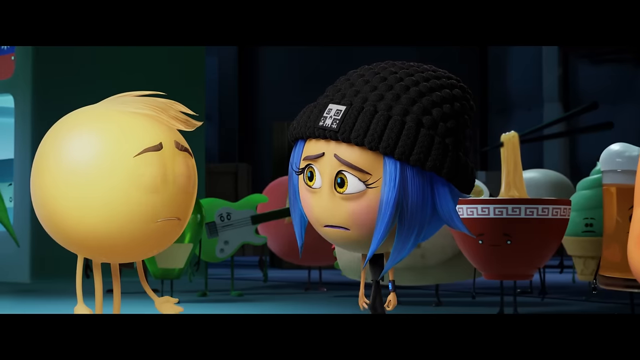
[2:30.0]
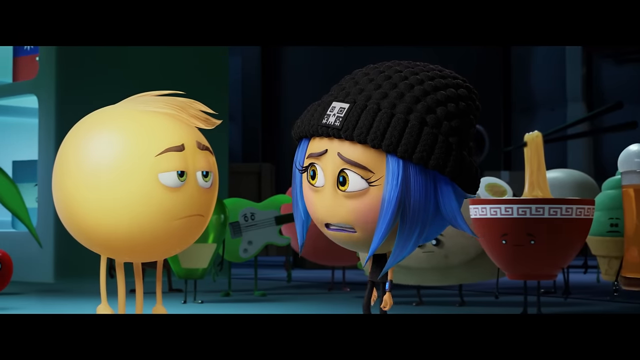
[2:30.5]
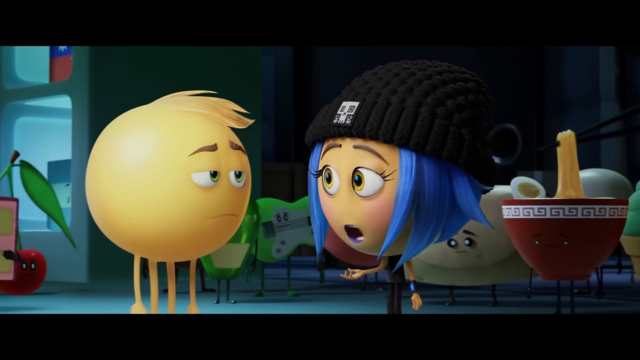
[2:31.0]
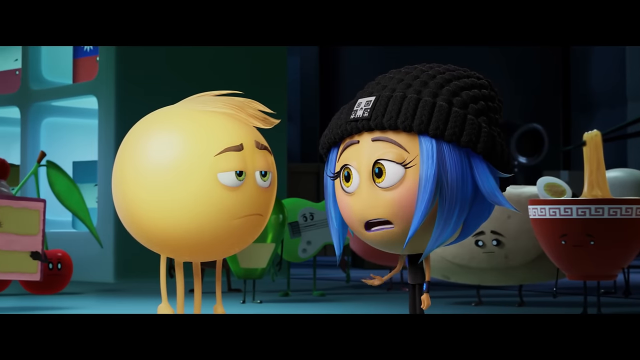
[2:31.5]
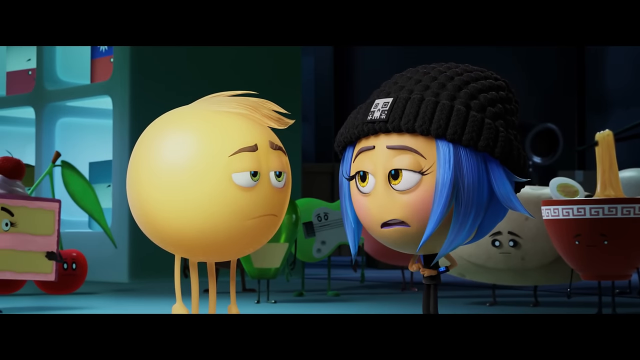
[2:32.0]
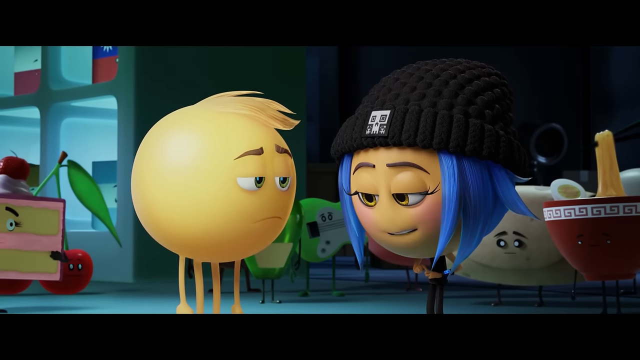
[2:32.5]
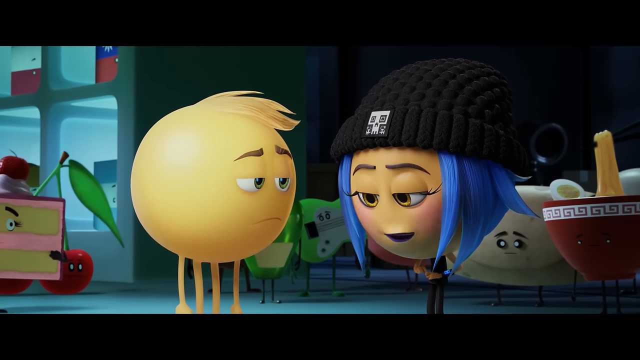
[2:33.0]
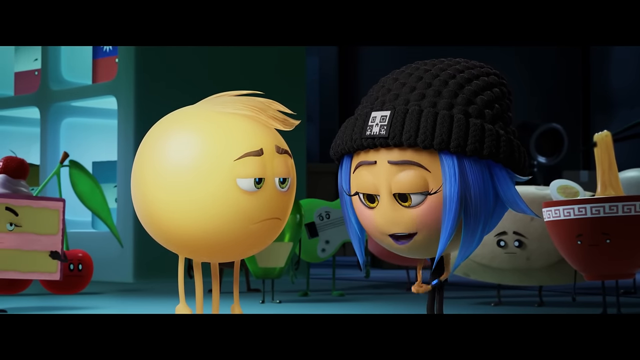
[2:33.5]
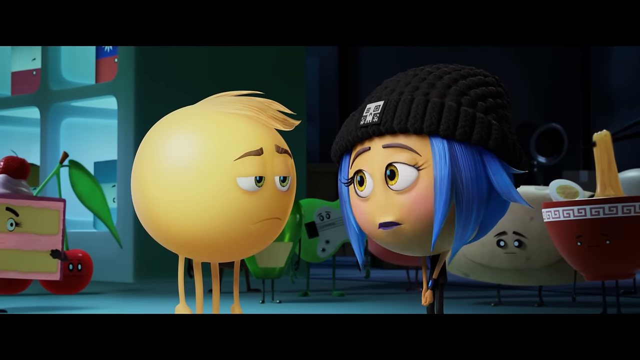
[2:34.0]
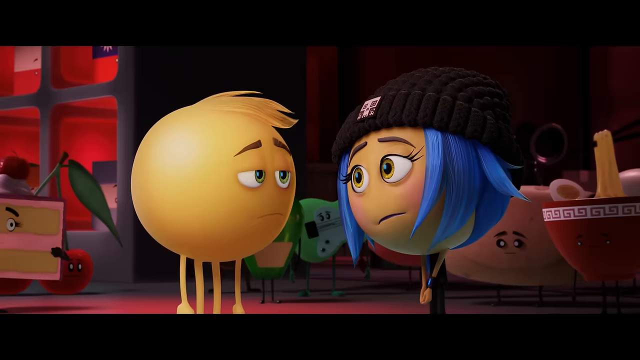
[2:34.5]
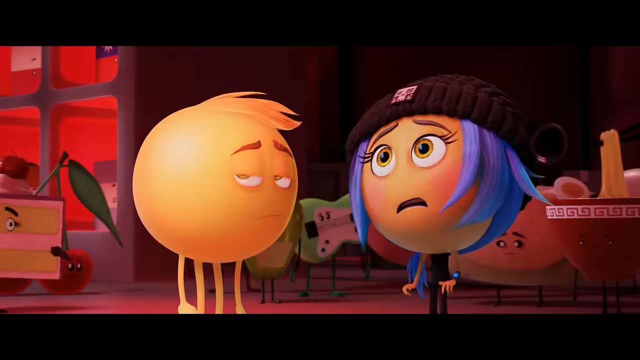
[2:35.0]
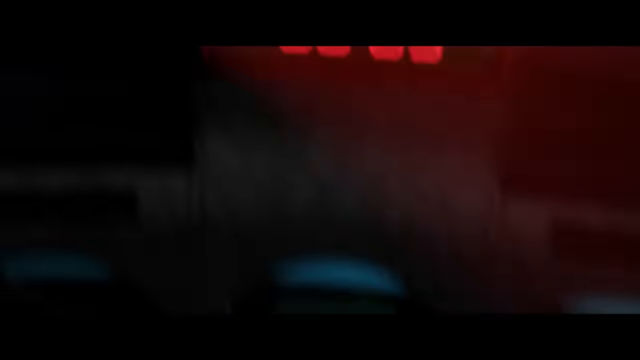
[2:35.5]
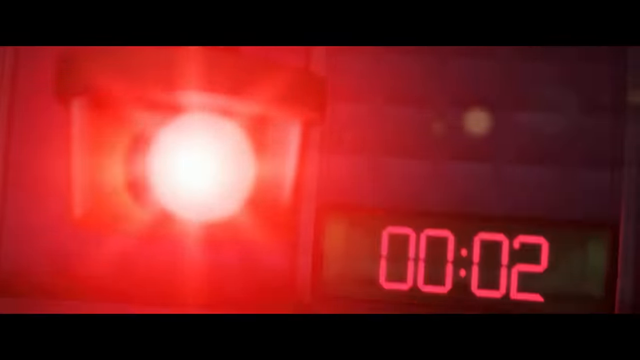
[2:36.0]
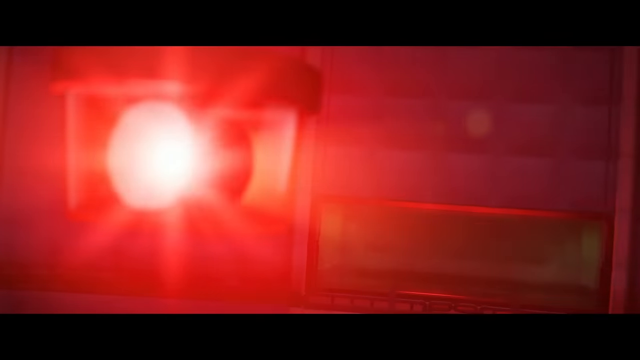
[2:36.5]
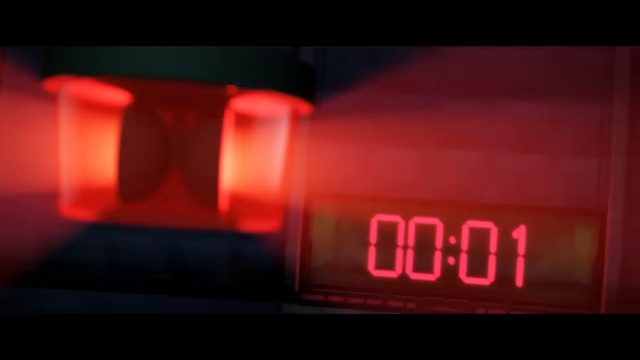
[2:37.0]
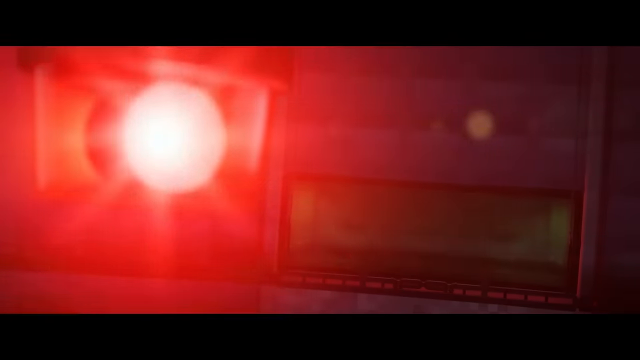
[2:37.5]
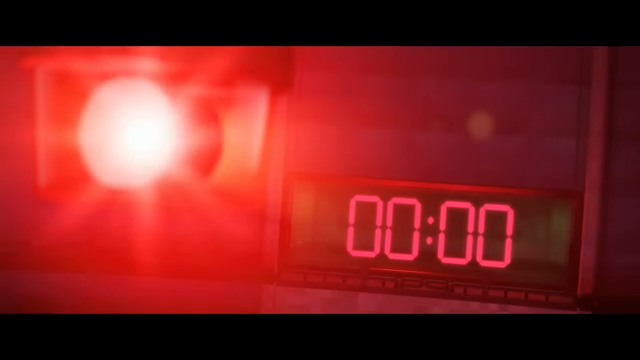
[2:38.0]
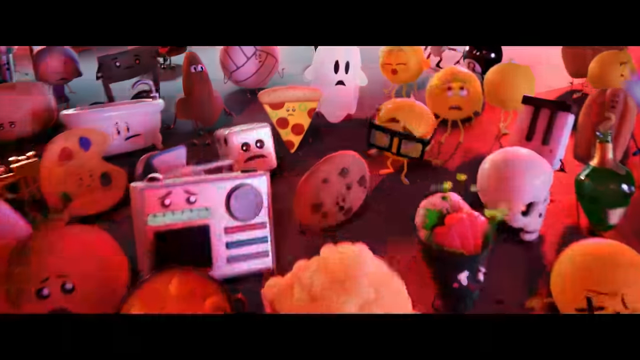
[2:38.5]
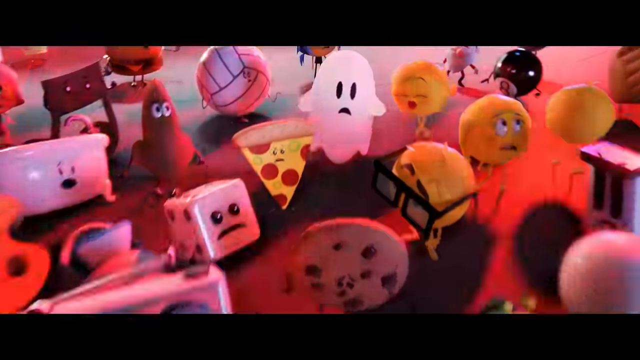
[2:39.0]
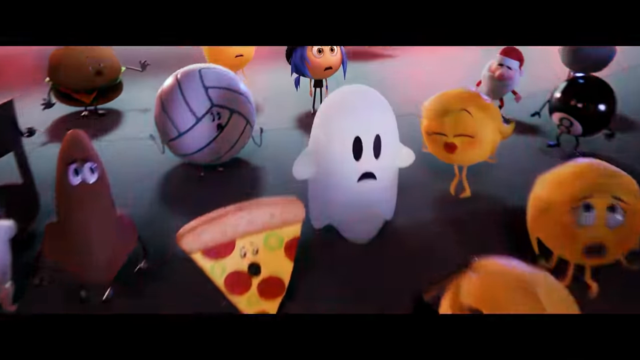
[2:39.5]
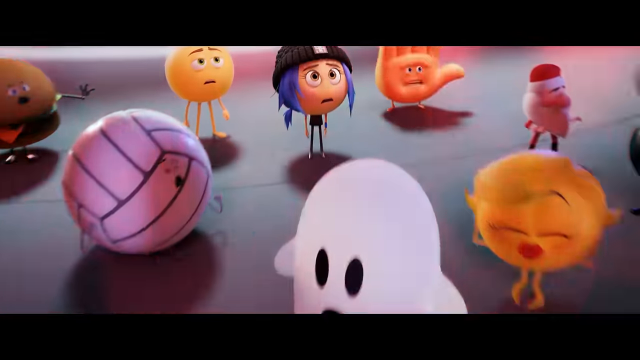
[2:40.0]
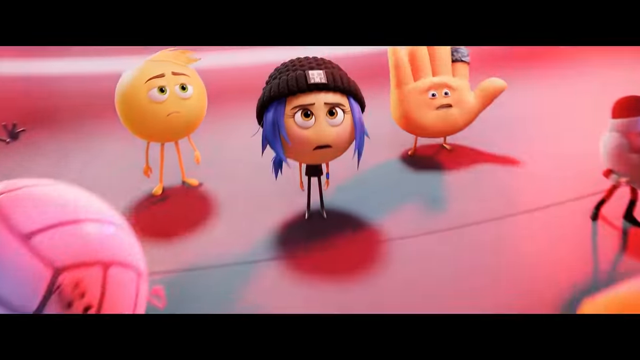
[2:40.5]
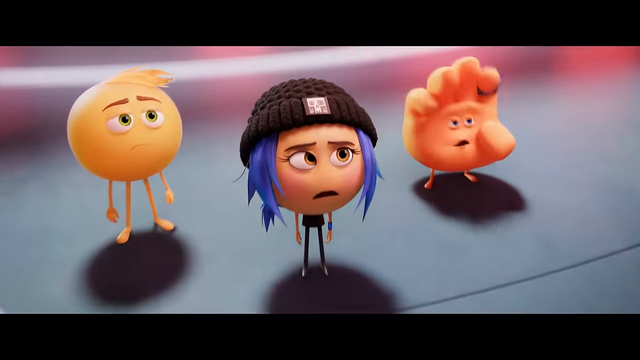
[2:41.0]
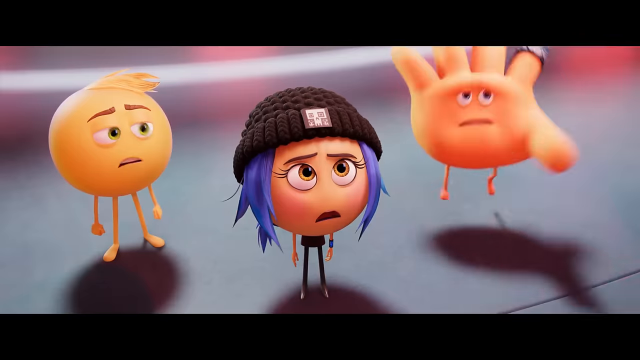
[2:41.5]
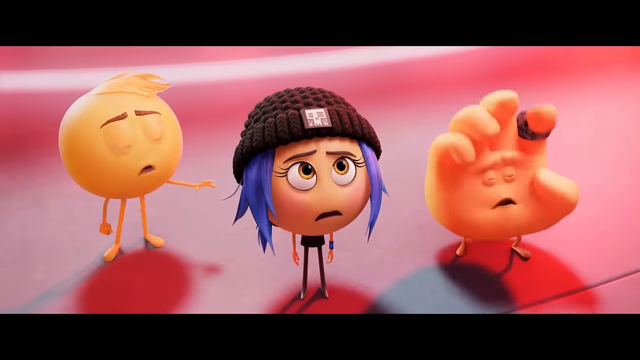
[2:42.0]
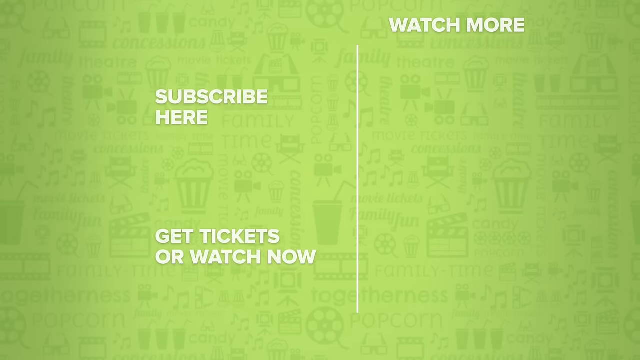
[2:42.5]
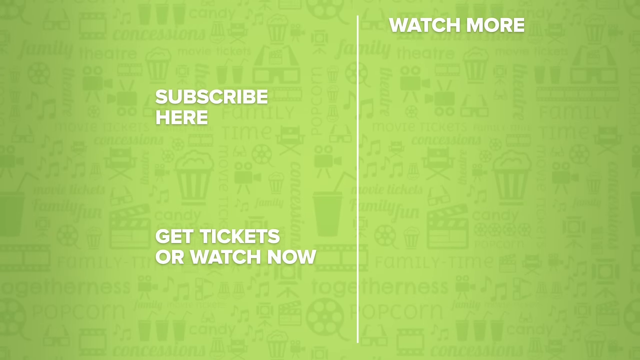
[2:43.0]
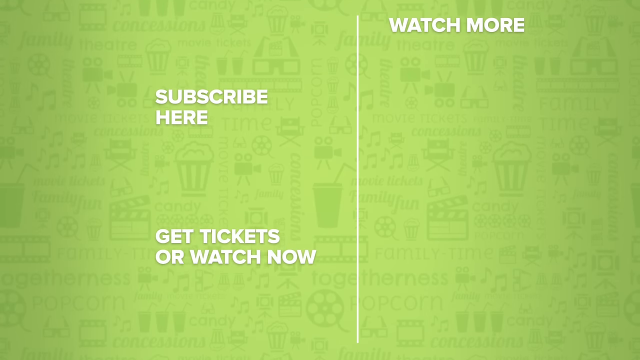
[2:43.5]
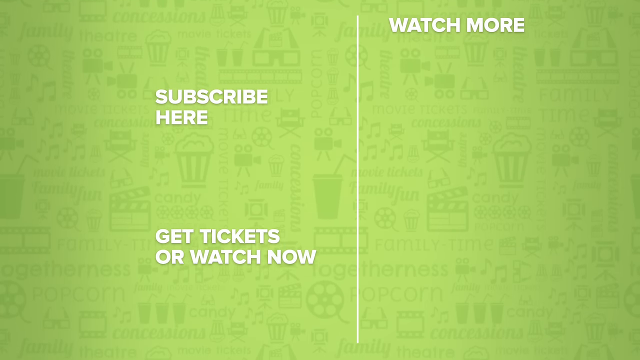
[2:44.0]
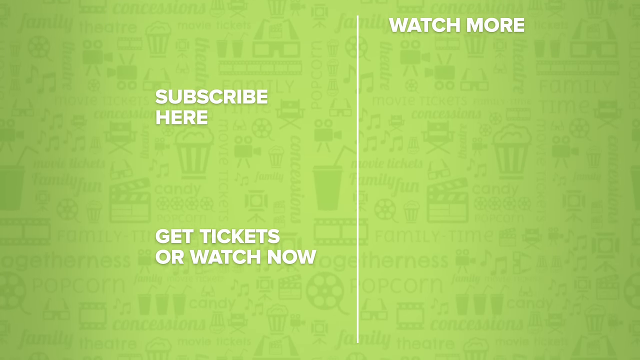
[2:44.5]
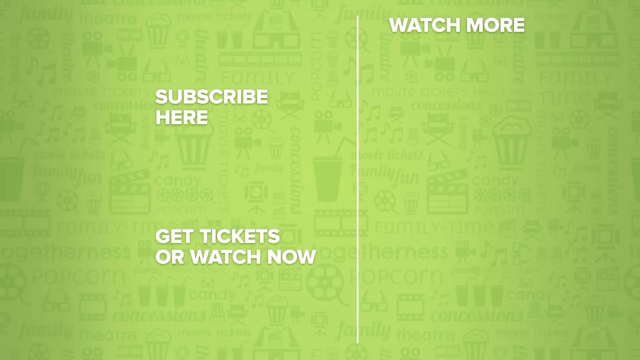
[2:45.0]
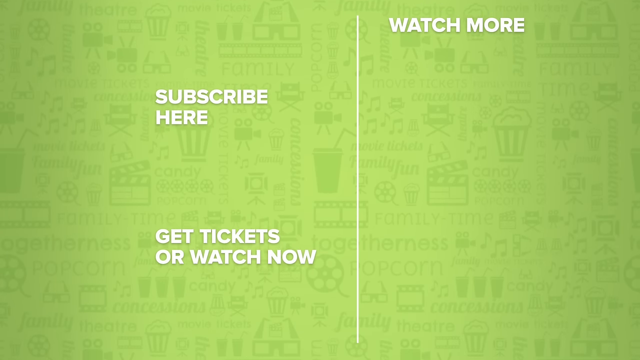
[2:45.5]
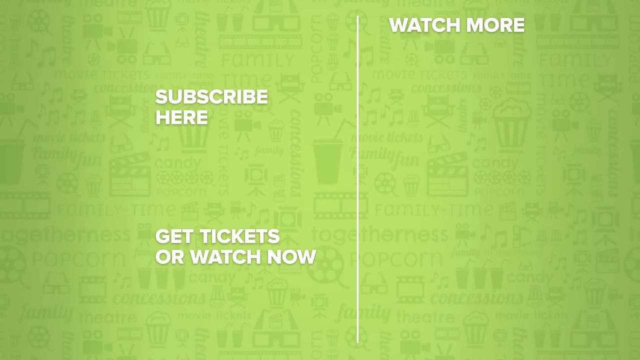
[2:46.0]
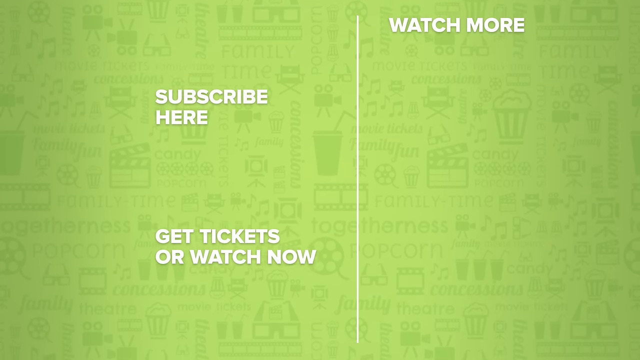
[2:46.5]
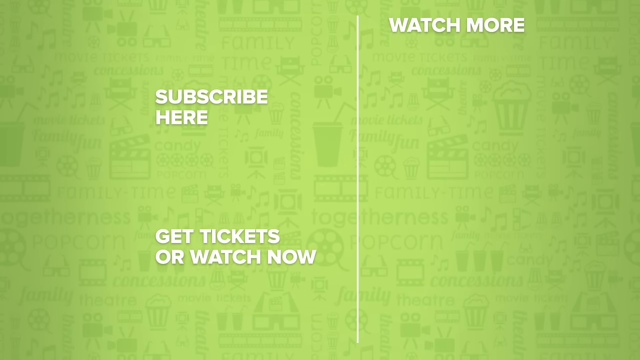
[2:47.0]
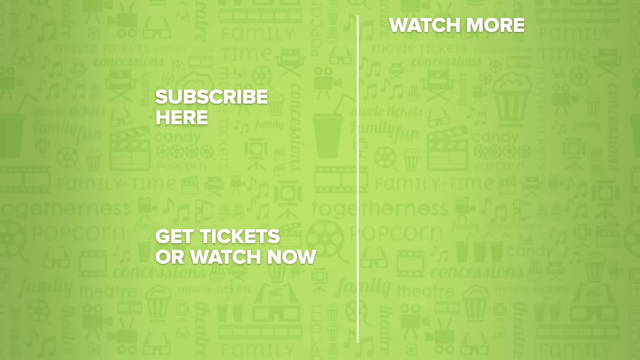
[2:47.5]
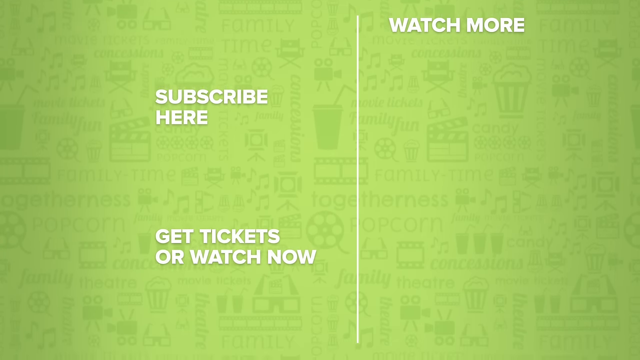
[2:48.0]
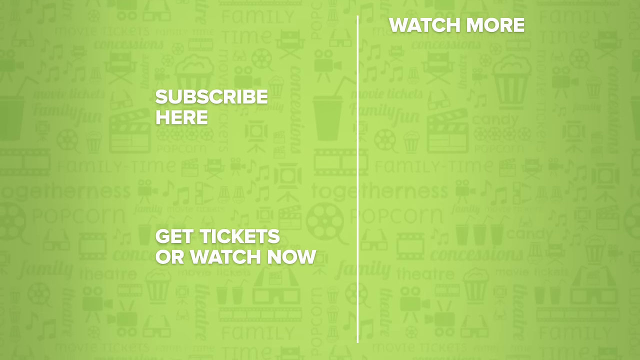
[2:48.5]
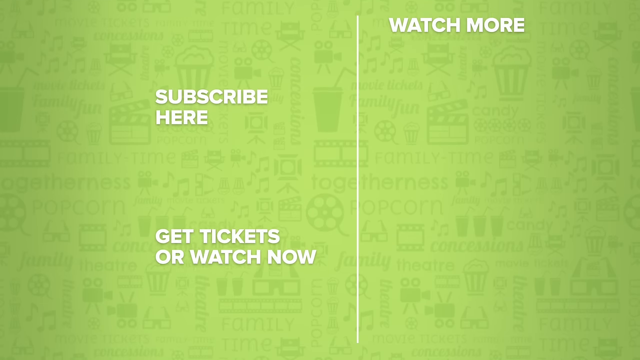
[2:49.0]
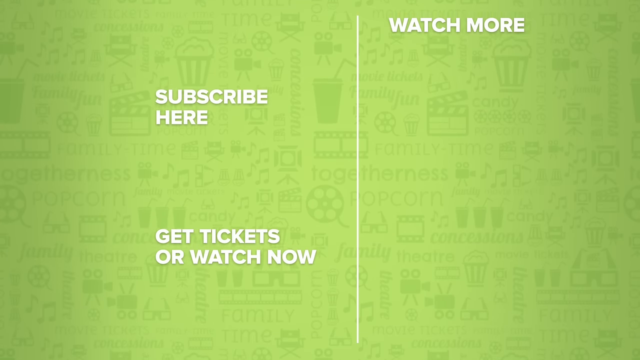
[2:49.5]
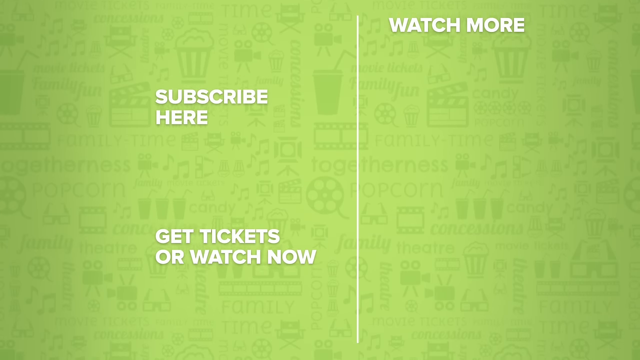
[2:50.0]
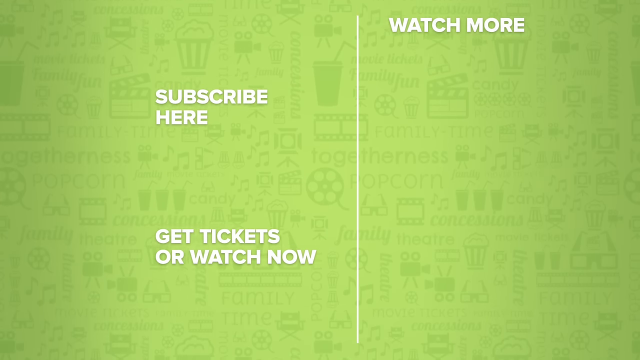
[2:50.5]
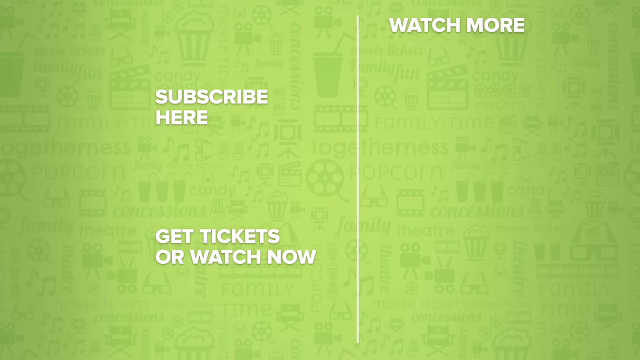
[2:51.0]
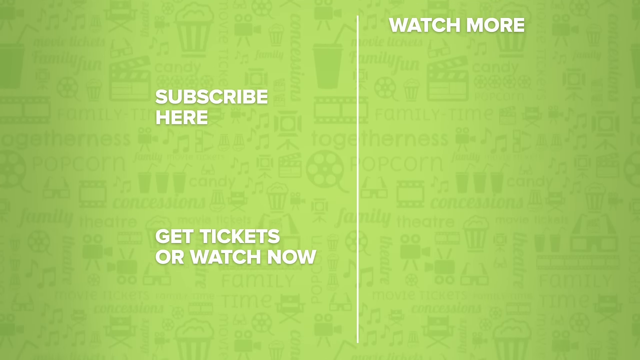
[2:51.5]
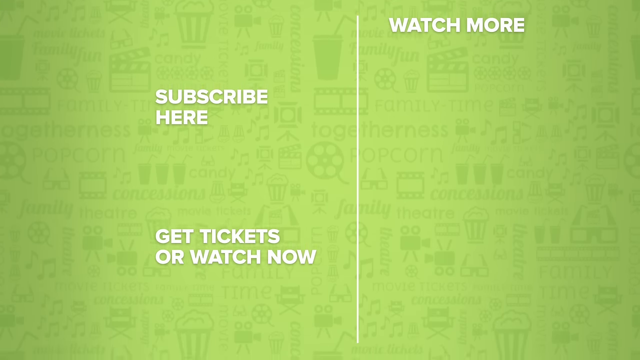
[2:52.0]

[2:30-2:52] Jailbreak and Jean-May have a conversation. One of them wears a black hat with a QR code on the front and has blue hair and black clothes. Jean-May wears nothing and is a yellow emoji with brown hair on top. As they talk, the countdown reaches zero, and the entire laboratory or jail chamber blinks red. All the emojis look curious about what will happen. Hi5, made of a palm with fingers, jumps here and there, and its fingers move up and down as it talks. Other emojis are present in the scene, including a bathtub, a dice, a pizza slice, a cookie, a ghost, a ball and poop.